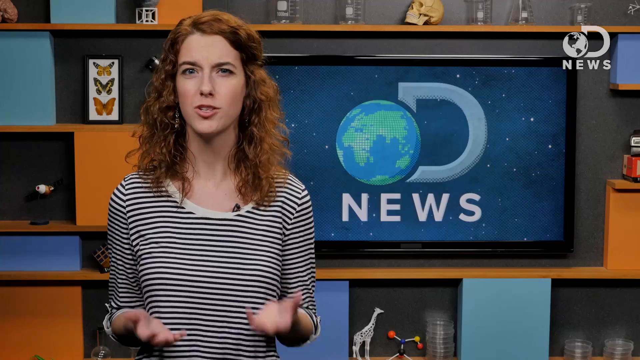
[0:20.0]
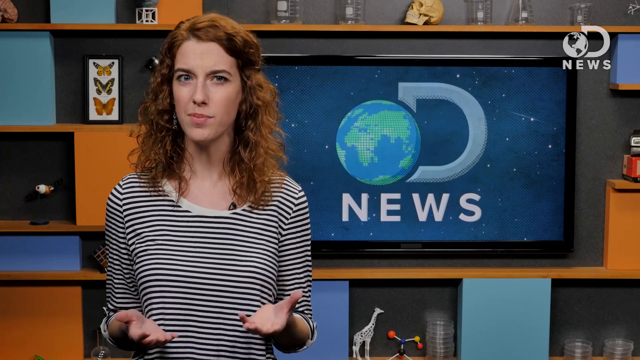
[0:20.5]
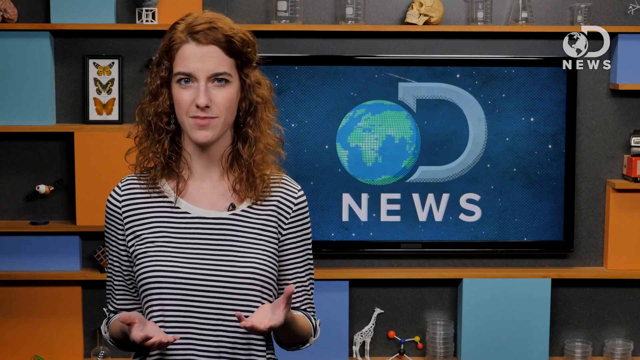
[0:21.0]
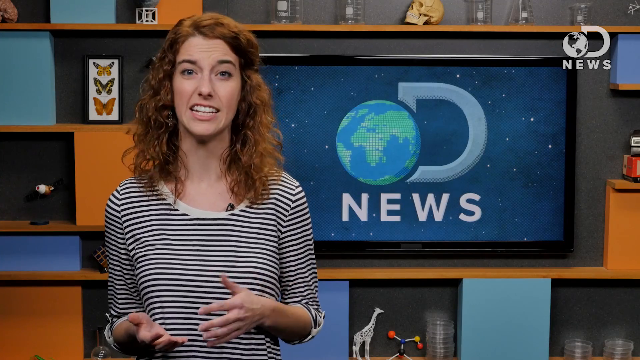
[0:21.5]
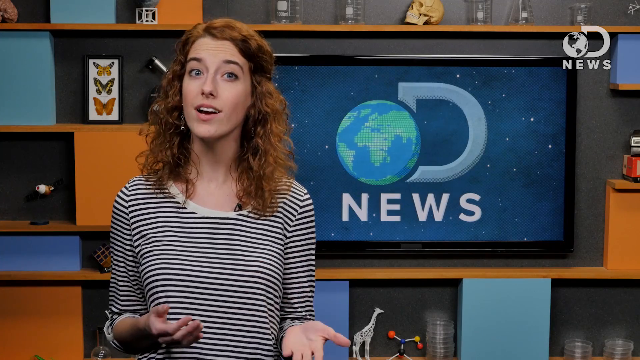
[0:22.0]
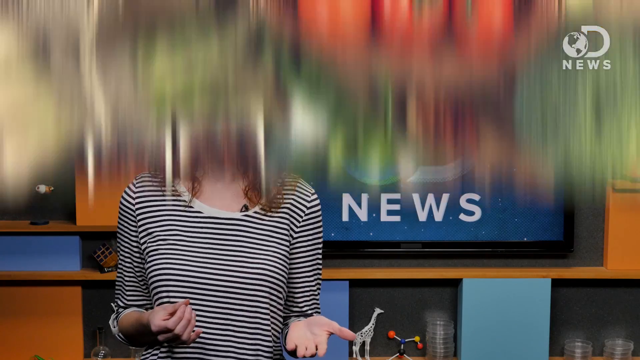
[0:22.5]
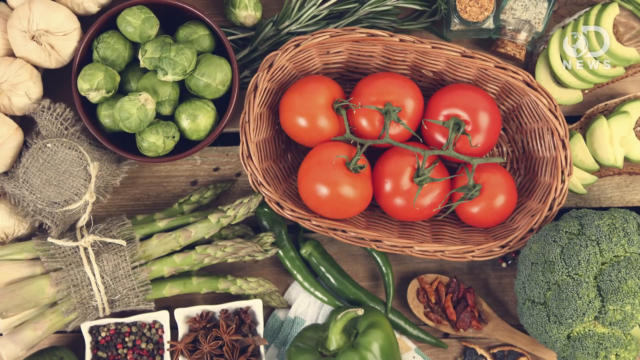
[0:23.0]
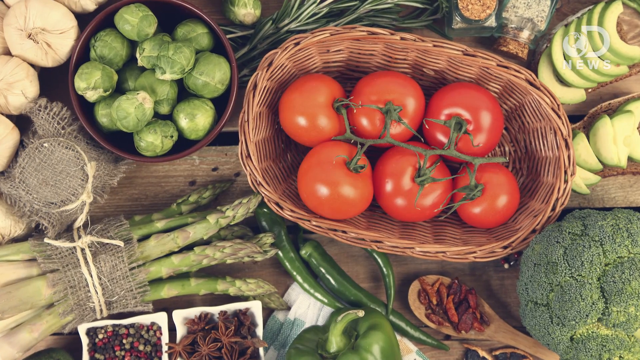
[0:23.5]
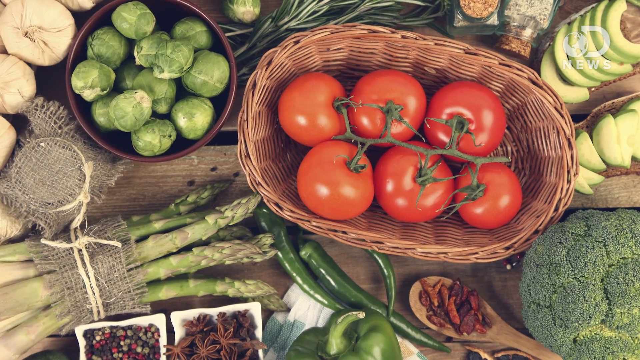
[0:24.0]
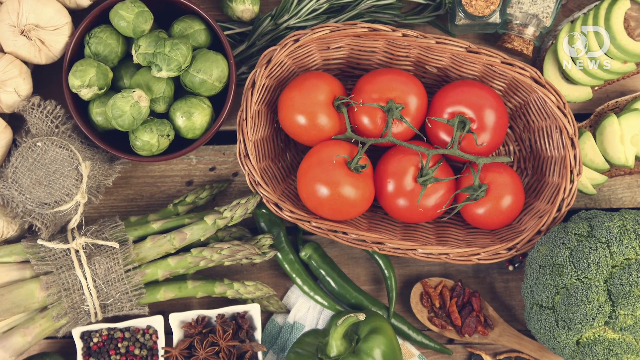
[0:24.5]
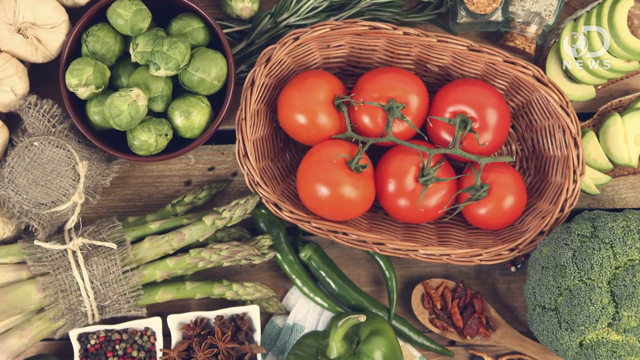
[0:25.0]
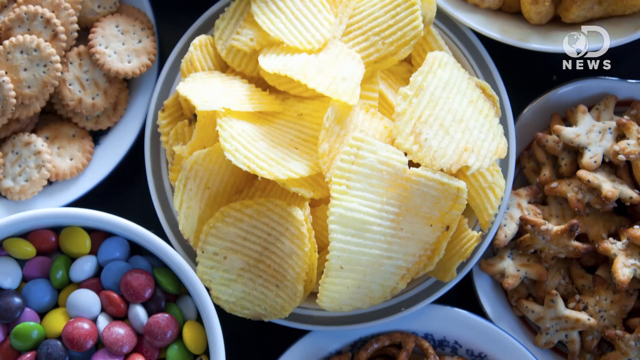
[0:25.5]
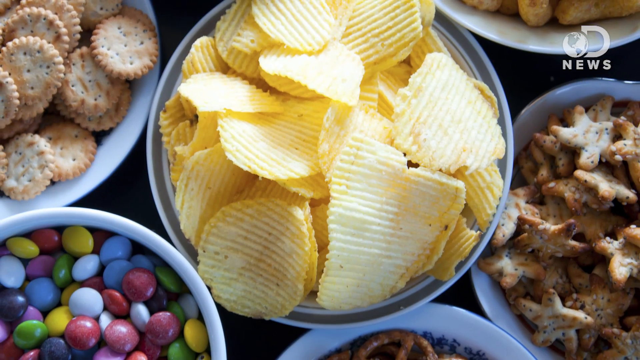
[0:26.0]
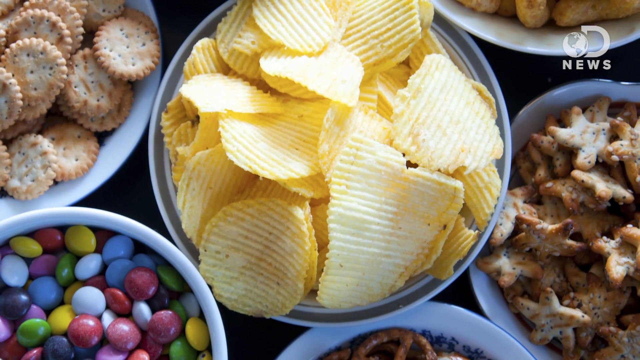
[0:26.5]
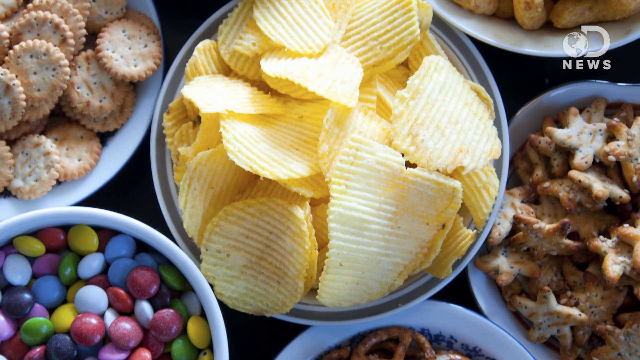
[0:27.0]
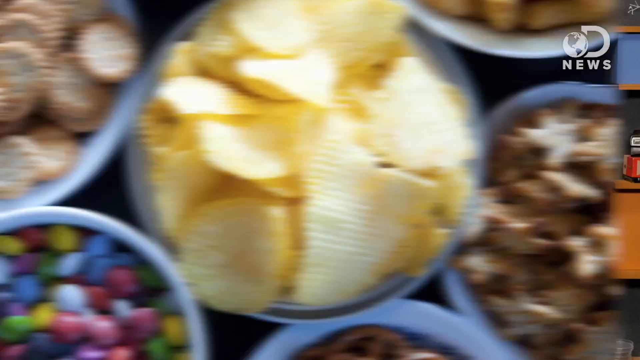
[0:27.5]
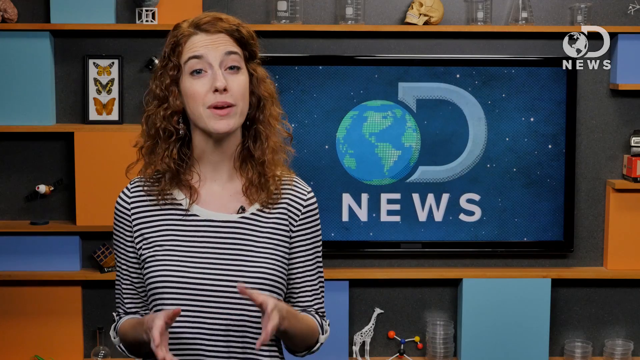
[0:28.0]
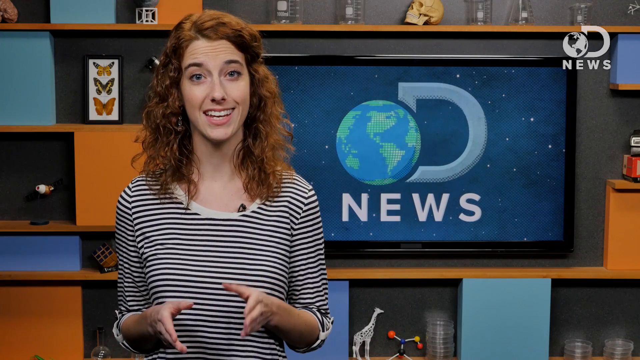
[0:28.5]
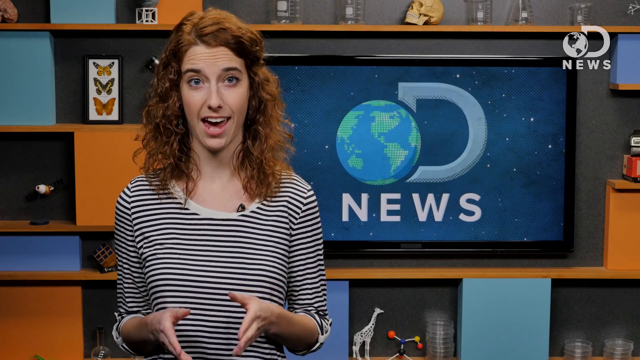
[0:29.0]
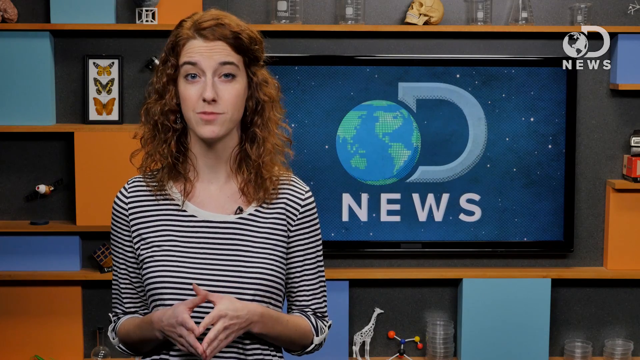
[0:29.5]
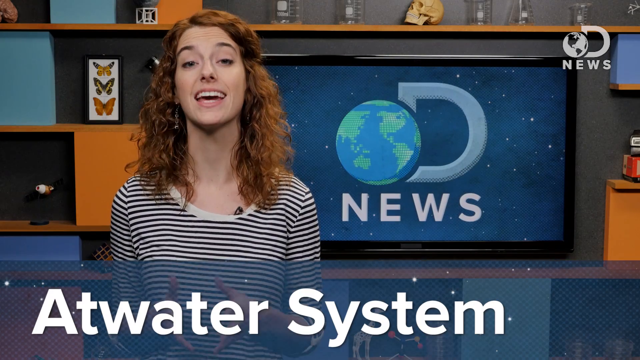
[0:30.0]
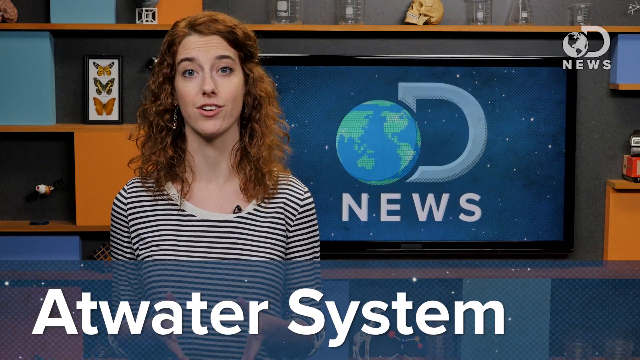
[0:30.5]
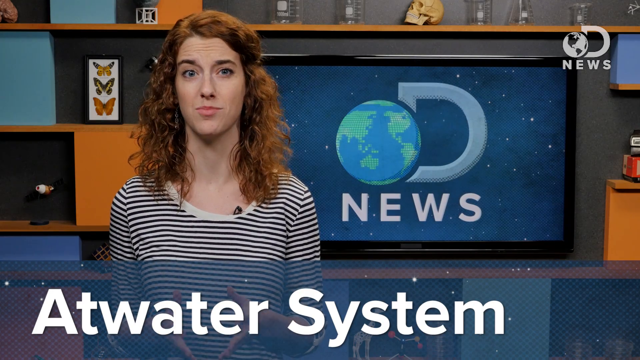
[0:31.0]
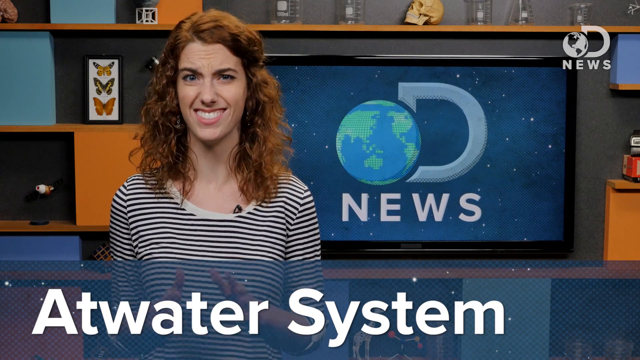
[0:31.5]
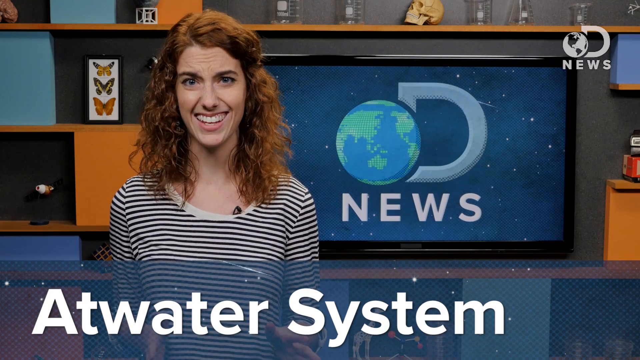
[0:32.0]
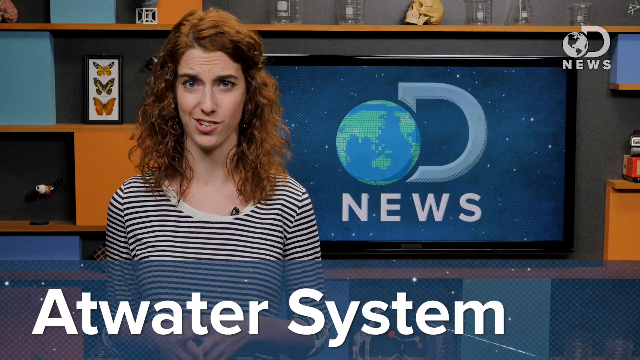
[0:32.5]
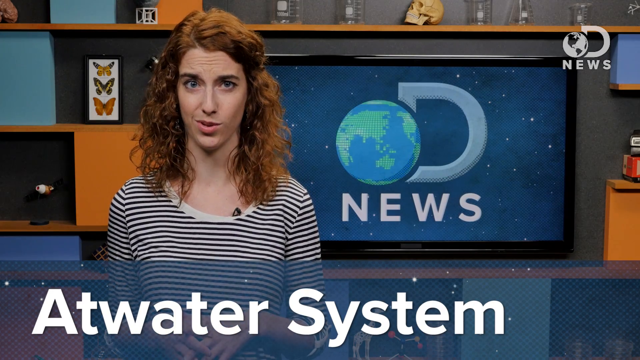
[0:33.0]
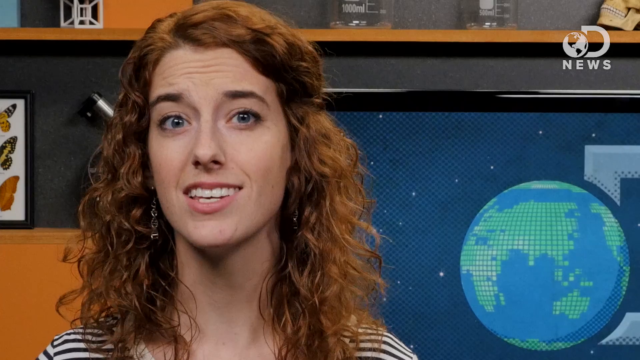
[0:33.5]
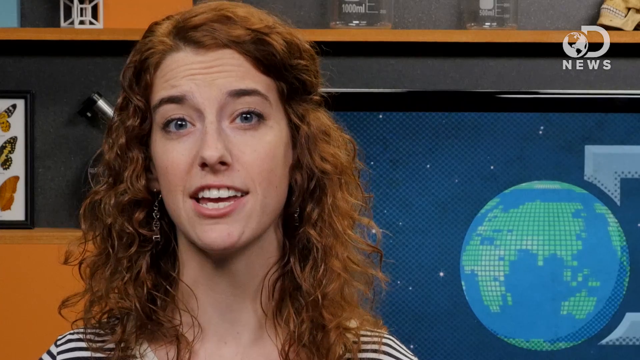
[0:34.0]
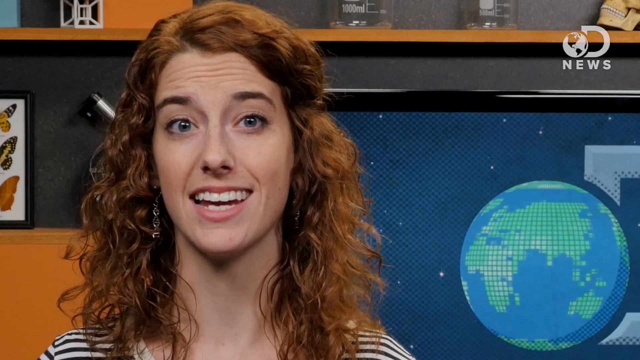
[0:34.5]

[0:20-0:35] A woman stands in front of a TV screen that shows a spinning picture of the earth and reads either world news or OD news. She has long, curly red hair. The video returns to the logo, and then she talks. A package of biscuits appears with a magnifying glass over the nutrition facts on the back, showing the calorie count: a serving size of two biscuits, four servings per container, 250 calories, 100 calories from fat, 12 grams of fat, and the rest of the nutritional facts. The video returns to her talking. Next, six red tomatoes are in a basket and 12 brussels sprouts are in a pottery bowl, with asparagus, some peppers and sliced avocado around the edges of those containers, laying on a table. Then a bowl of potato chips appears along with what looks to be cookies, a bowl of crackers, and a bowl of M&Ms. Back with the woman talking, the bottom of the screen reads "Atwater System." Four chocolate chip cookies follow, then two pieces of steak, one kind of on top of the other, with a sprig of rosemary, some peppercorns and some salt. The woman talks again. A person jogs, apparently on a hiking trail in the woods, running with a black Labrador retriever. The video cuts back to the red-haired woman talking. A grocery store produce section of potatoes and garlic appears, and the woman makes a kind of potato gesture, as if holding a potato in her hand. Potatoes boil on the stove, then comes a plate of french fries, then a chef sautéing something hard to make out in a pan. Celery sticks appear with the text "10 calories per stick." The woman talks again, and then kebabs with tomato, cucumber and onion are shown on a grill.